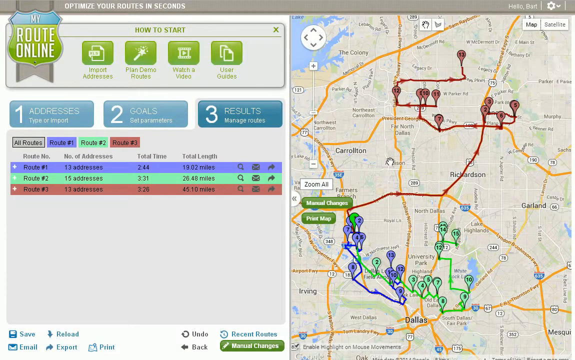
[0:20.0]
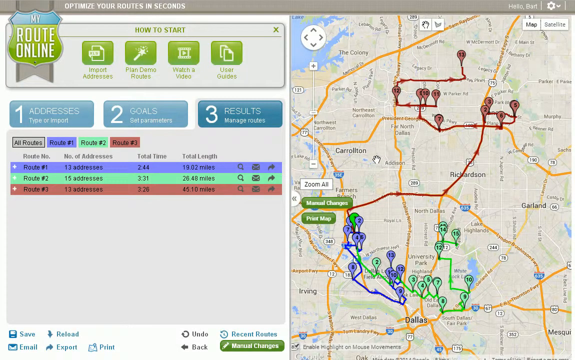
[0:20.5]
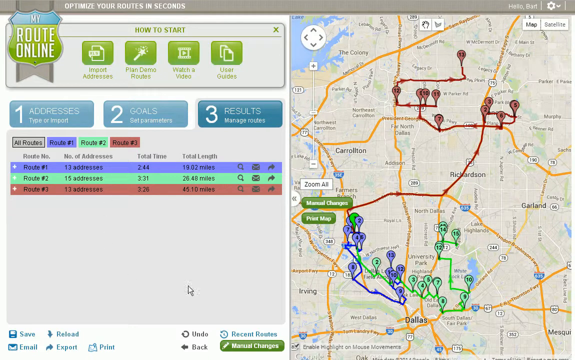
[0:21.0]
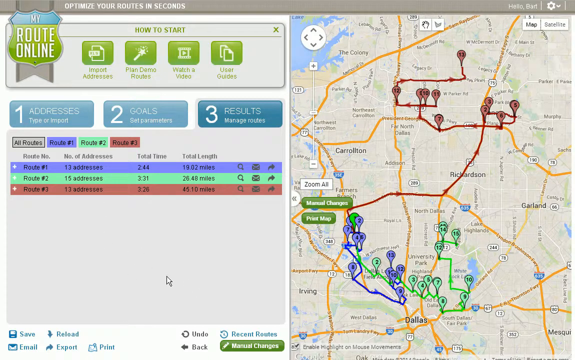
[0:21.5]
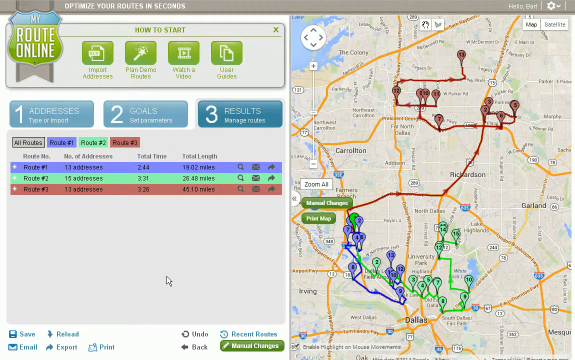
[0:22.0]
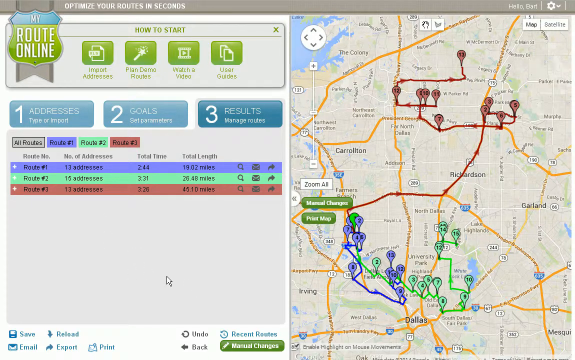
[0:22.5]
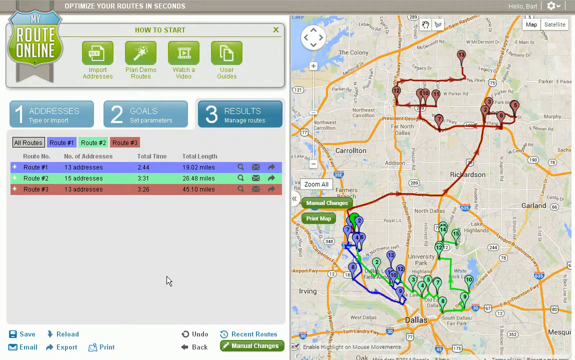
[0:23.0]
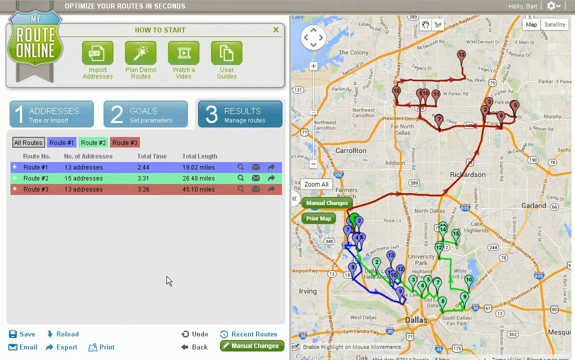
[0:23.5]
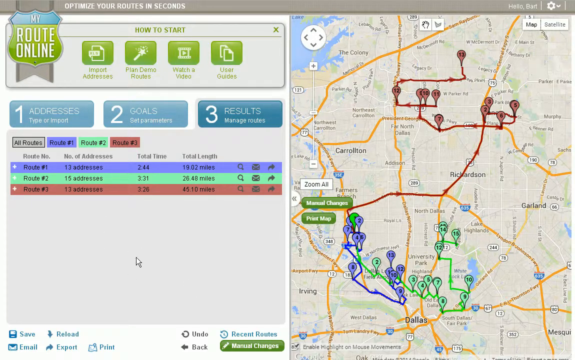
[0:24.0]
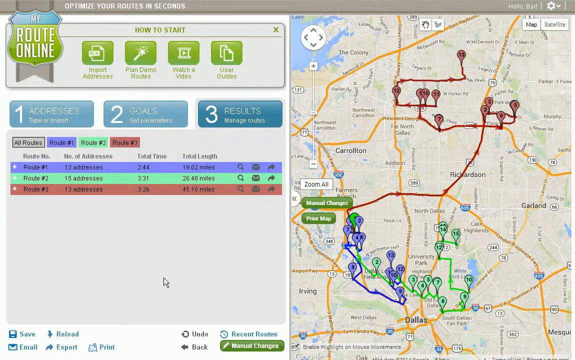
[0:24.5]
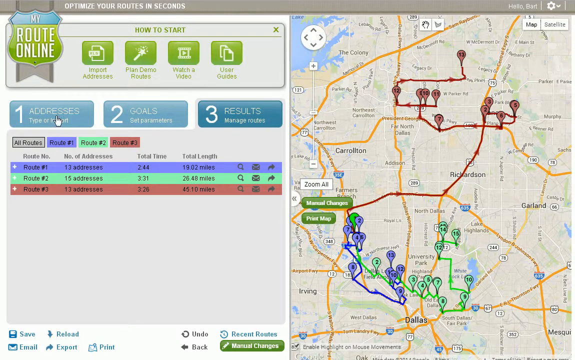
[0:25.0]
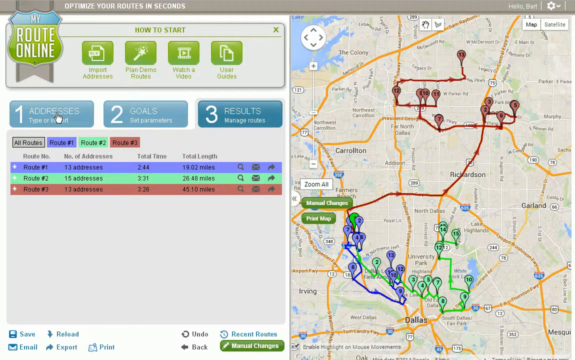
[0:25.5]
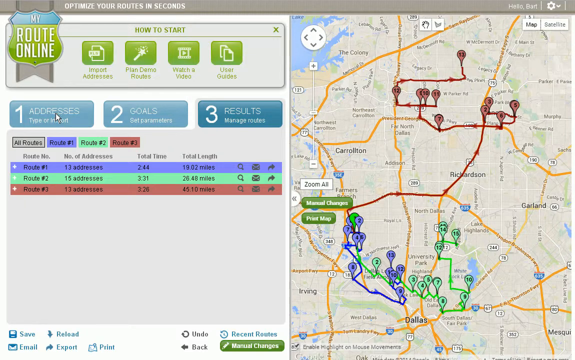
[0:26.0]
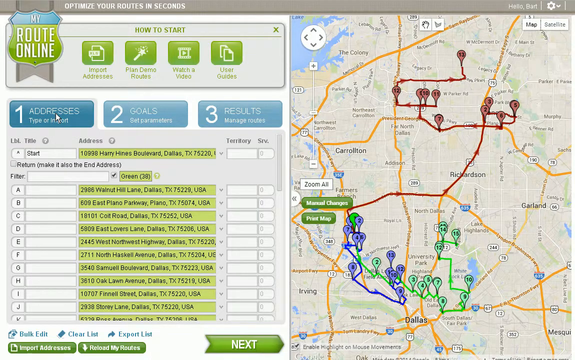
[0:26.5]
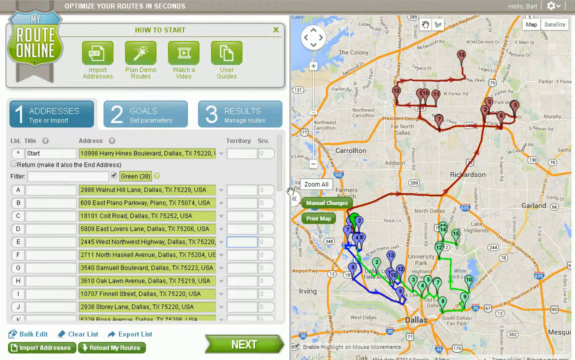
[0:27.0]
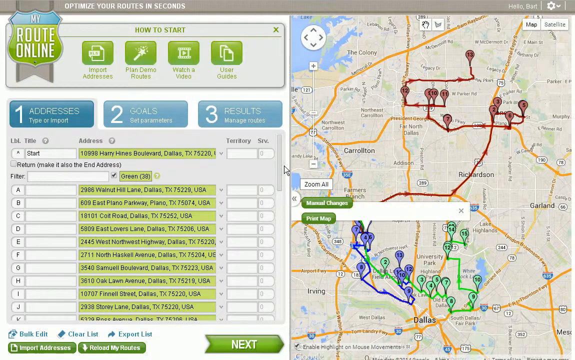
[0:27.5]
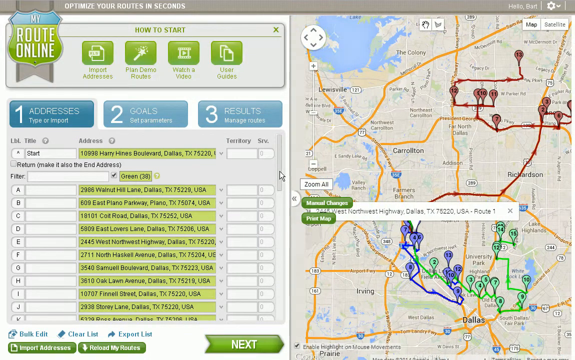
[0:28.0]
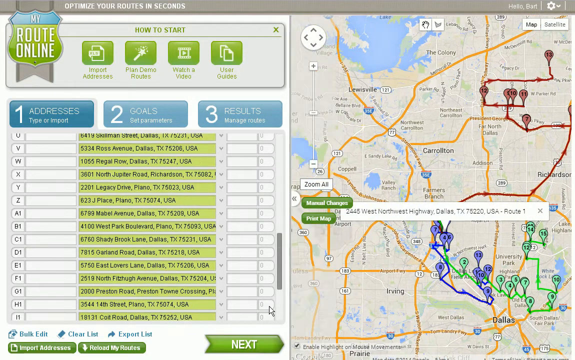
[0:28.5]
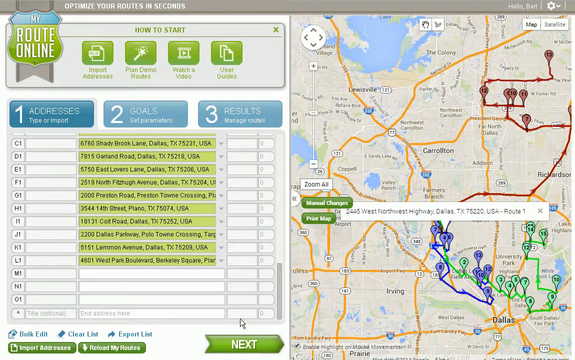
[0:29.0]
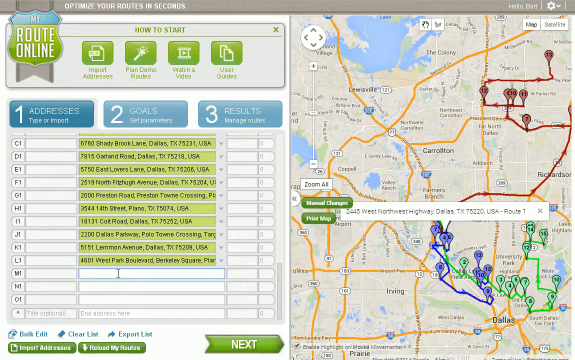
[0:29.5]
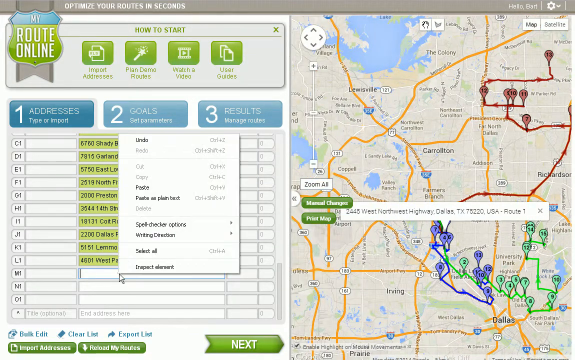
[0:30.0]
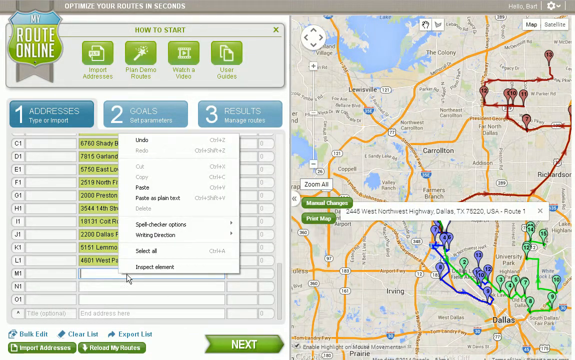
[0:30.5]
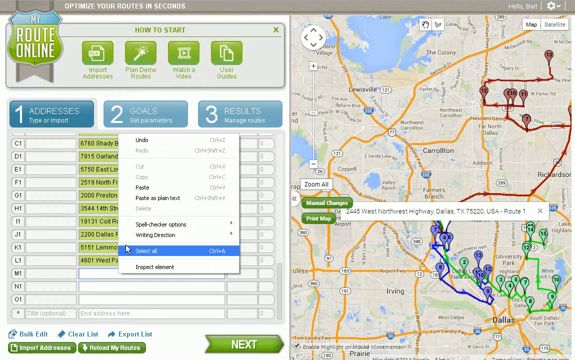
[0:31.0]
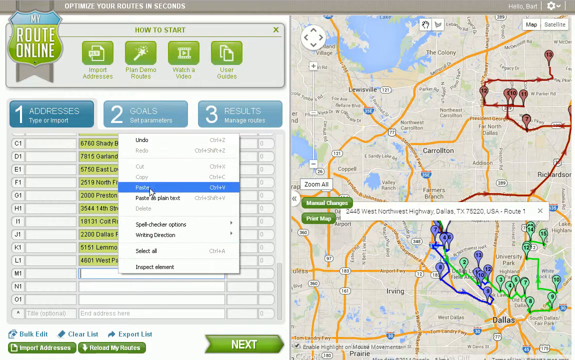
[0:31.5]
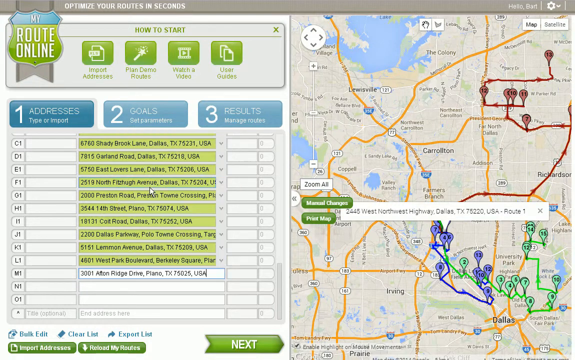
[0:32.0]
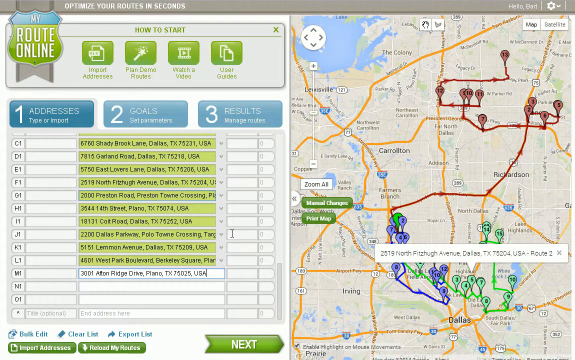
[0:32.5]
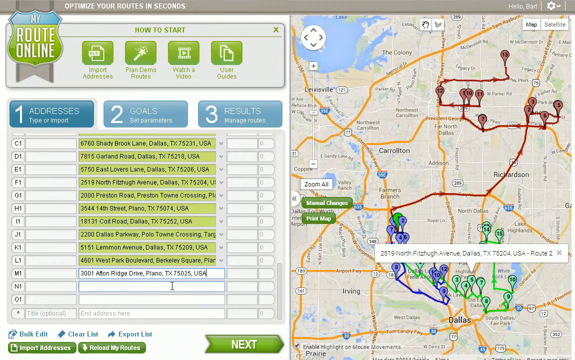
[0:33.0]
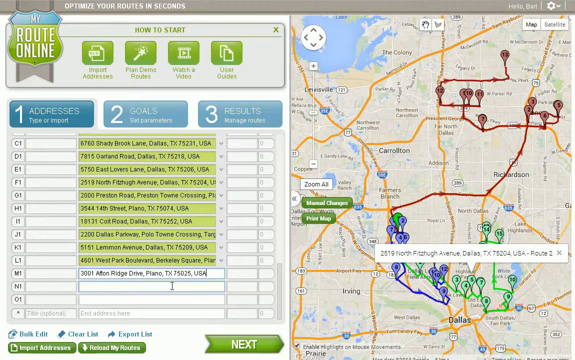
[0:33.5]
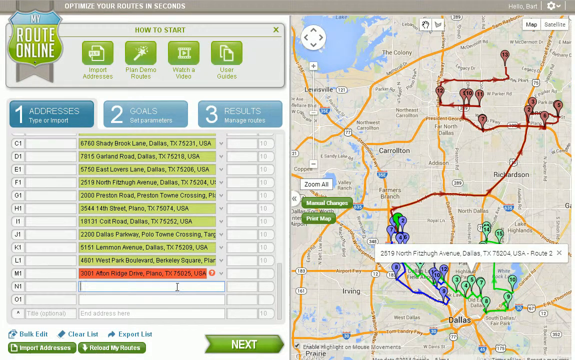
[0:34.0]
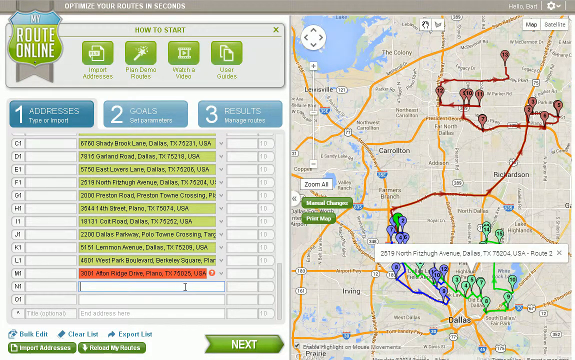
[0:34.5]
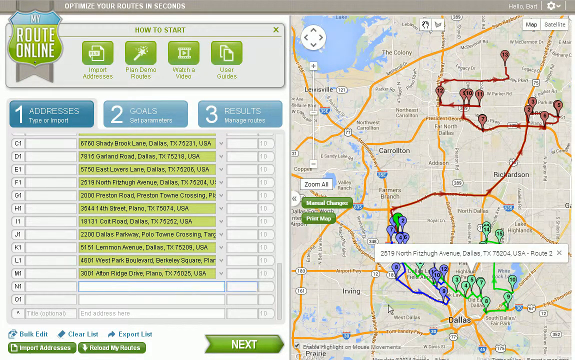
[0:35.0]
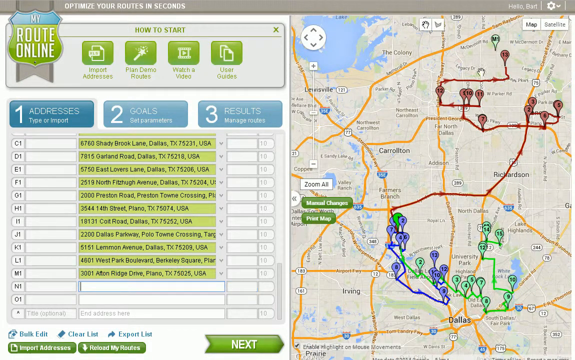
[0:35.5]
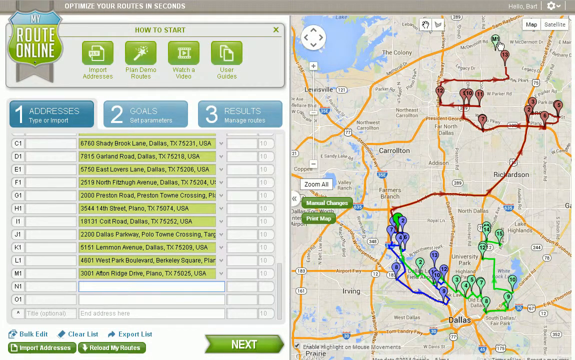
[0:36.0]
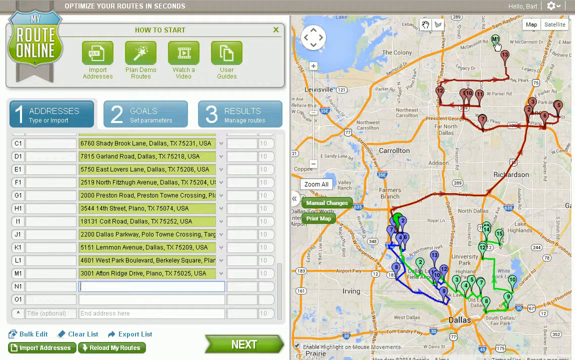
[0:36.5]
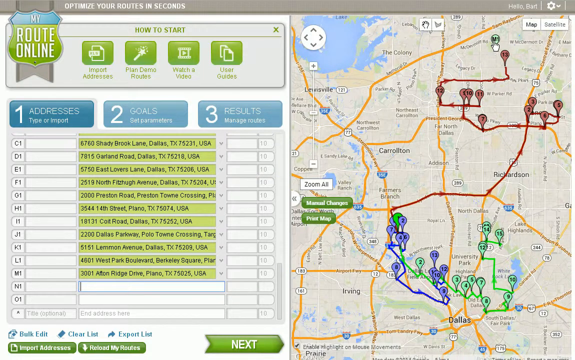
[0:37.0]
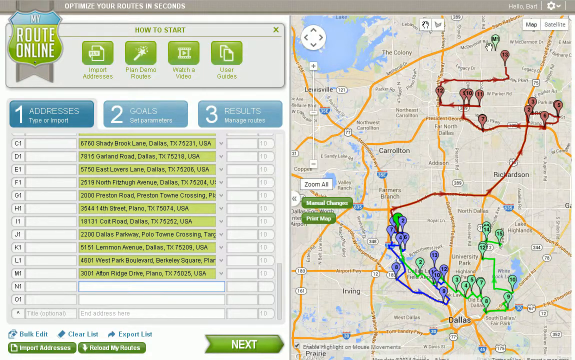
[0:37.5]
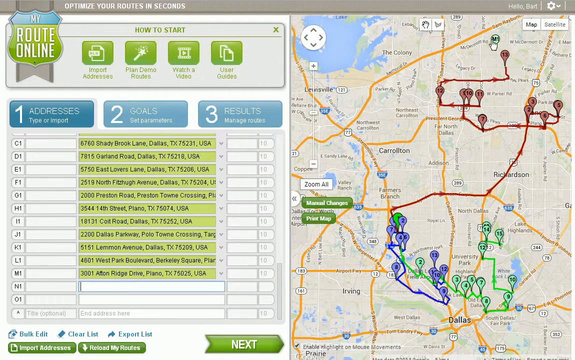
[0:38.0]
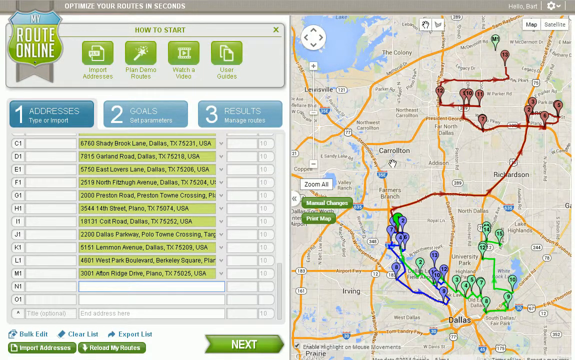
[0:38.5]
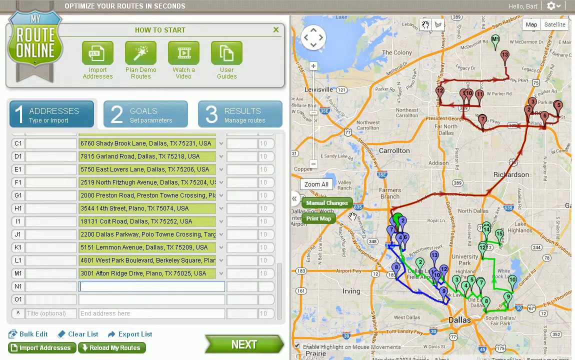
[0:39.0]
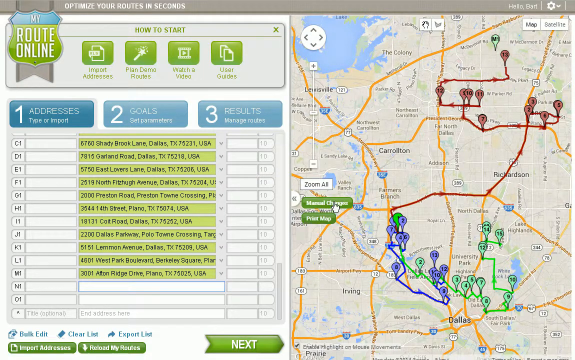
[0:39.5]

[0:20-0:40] The same map is on screen. The addresses button on the right-hand side is pressed, and it shows the exact addresses in the route. He adds an address, and a marker pops up at the top of the screen, far from the green route, which is down at the bottom. He then presses on manual changes.